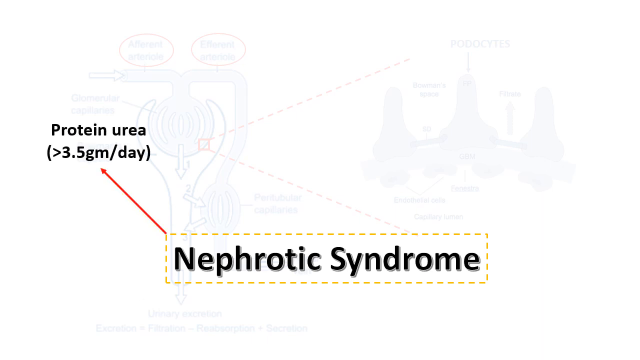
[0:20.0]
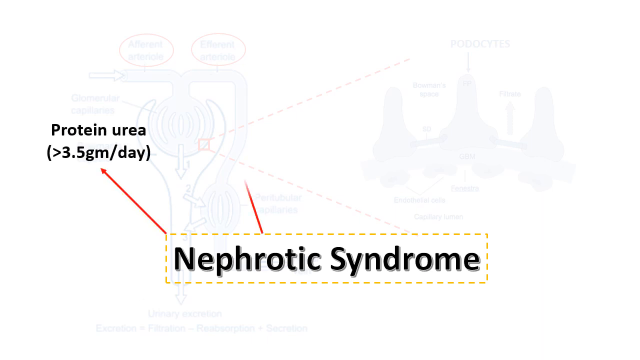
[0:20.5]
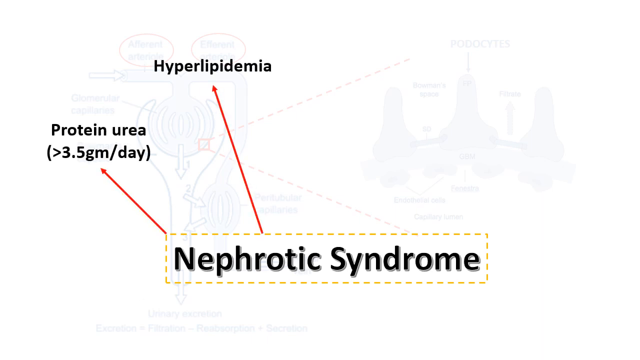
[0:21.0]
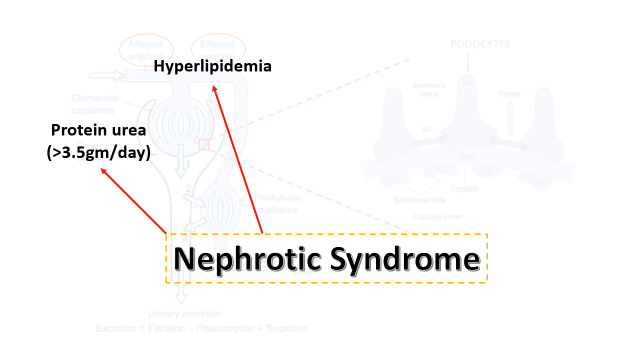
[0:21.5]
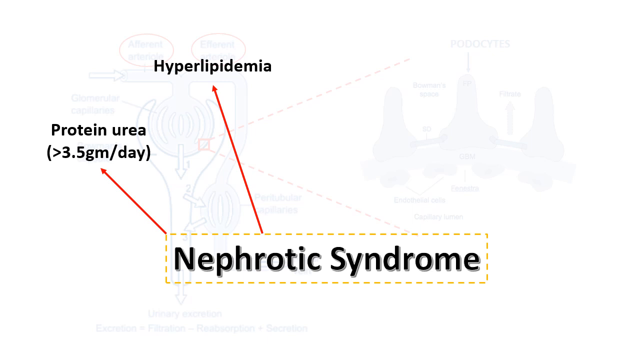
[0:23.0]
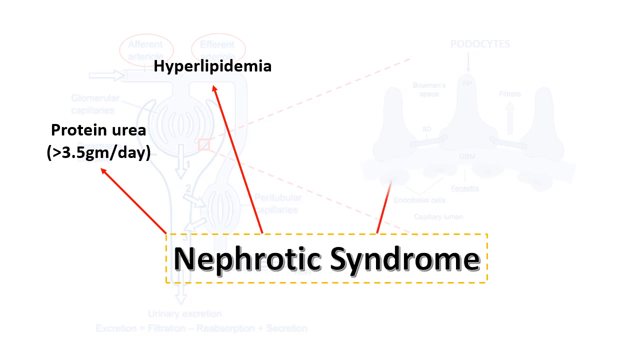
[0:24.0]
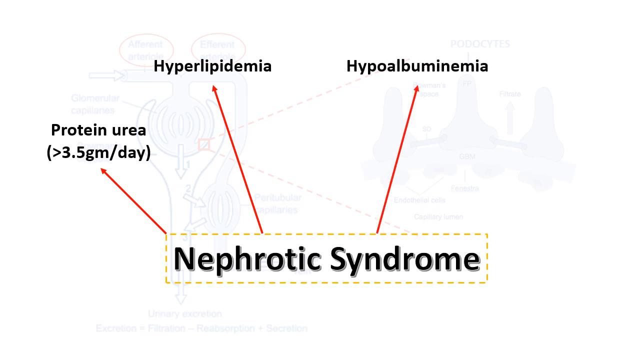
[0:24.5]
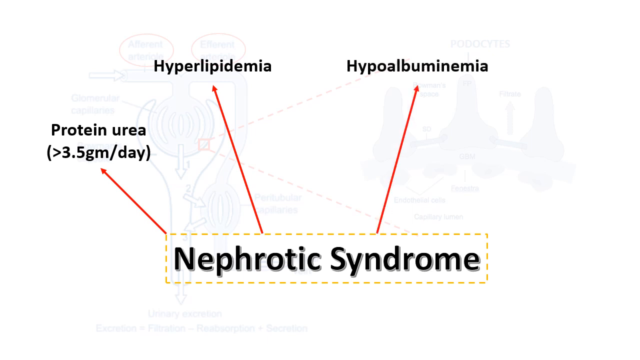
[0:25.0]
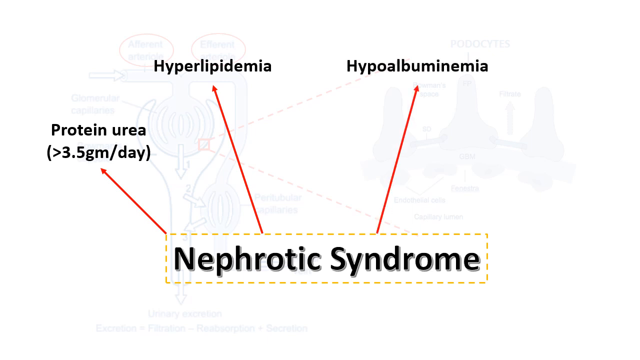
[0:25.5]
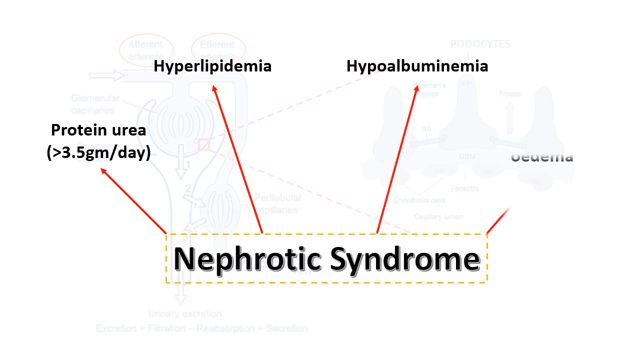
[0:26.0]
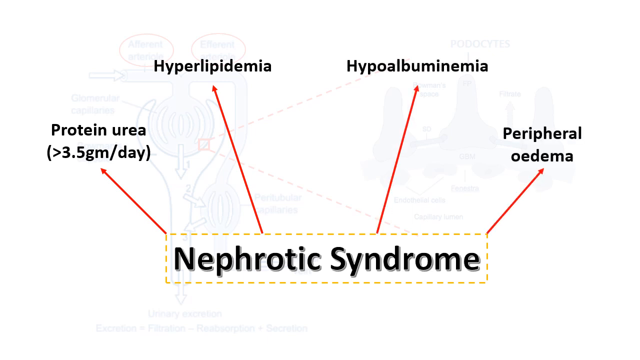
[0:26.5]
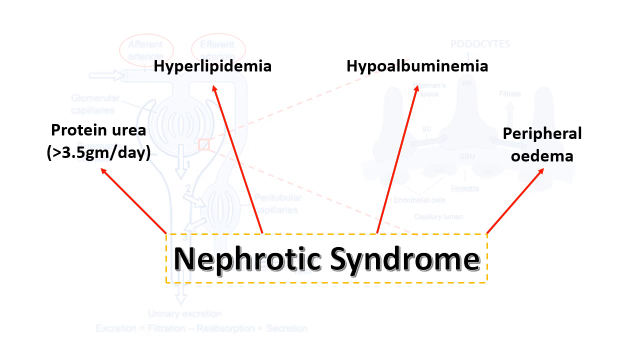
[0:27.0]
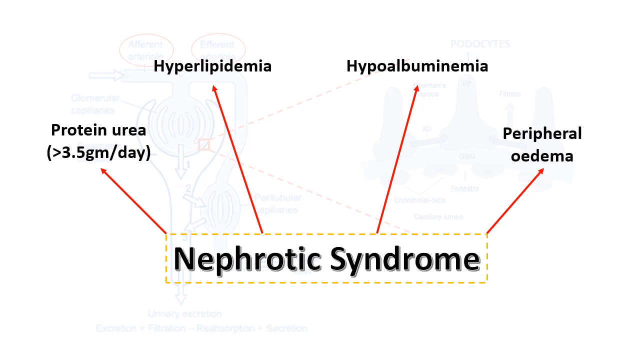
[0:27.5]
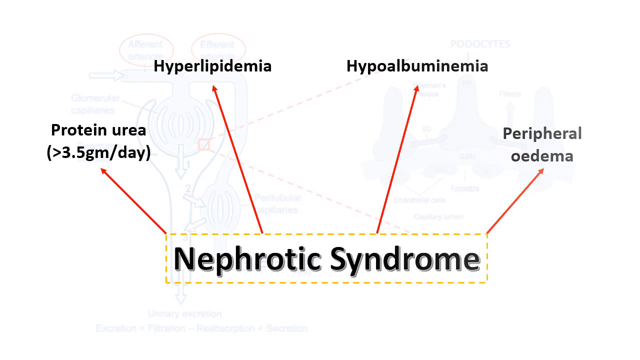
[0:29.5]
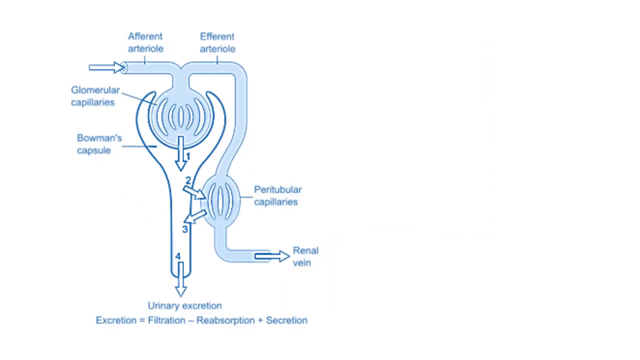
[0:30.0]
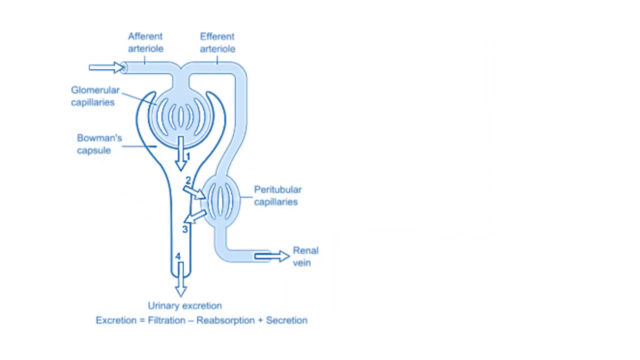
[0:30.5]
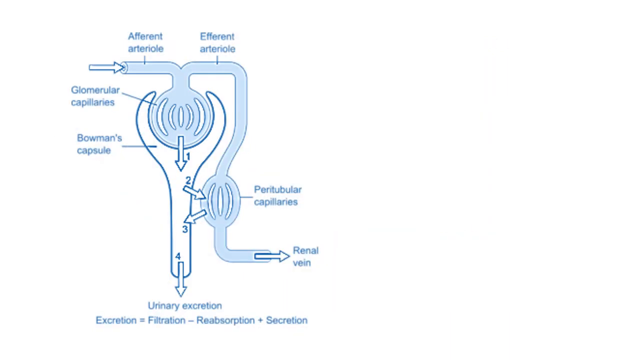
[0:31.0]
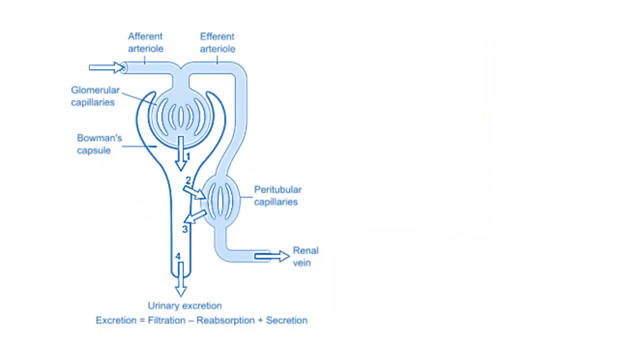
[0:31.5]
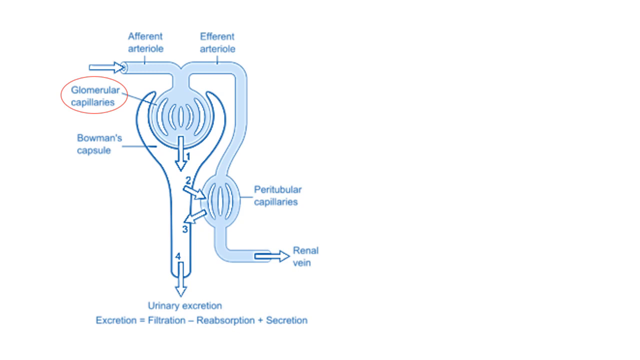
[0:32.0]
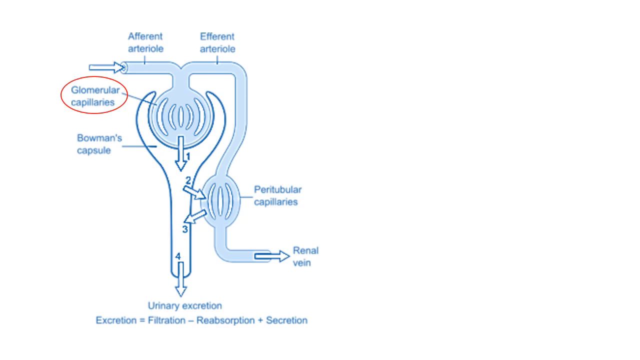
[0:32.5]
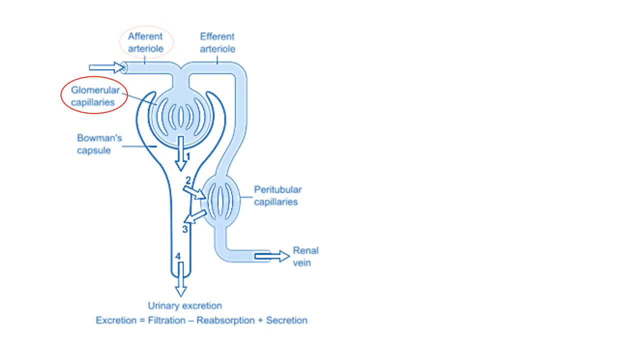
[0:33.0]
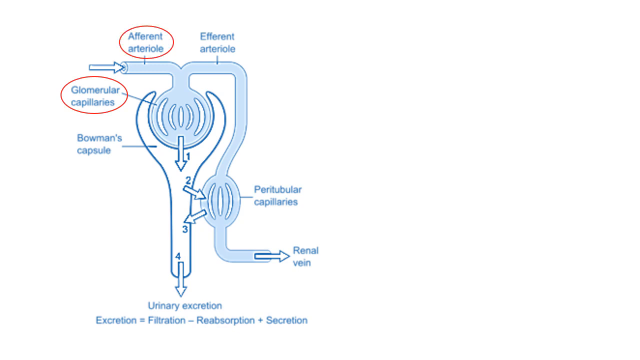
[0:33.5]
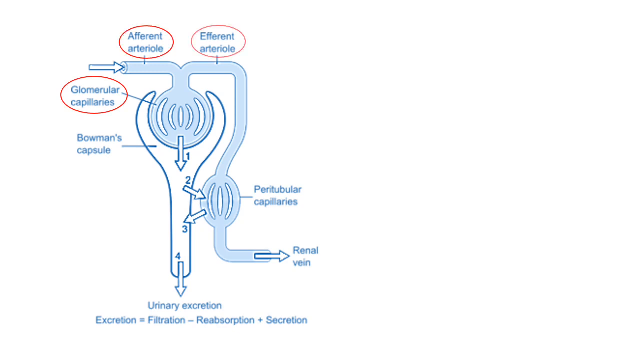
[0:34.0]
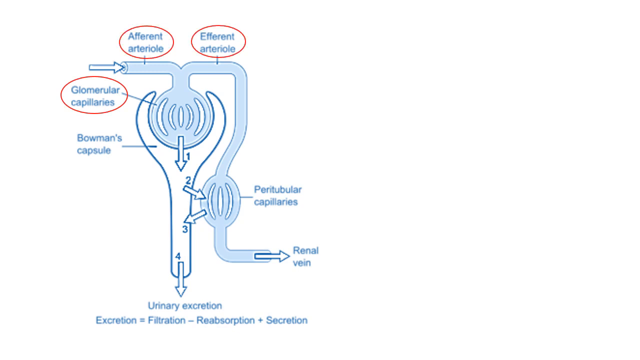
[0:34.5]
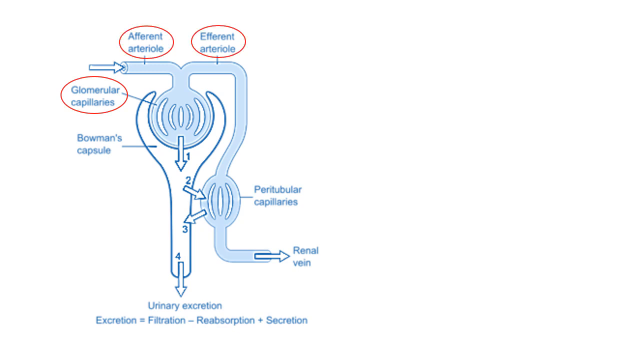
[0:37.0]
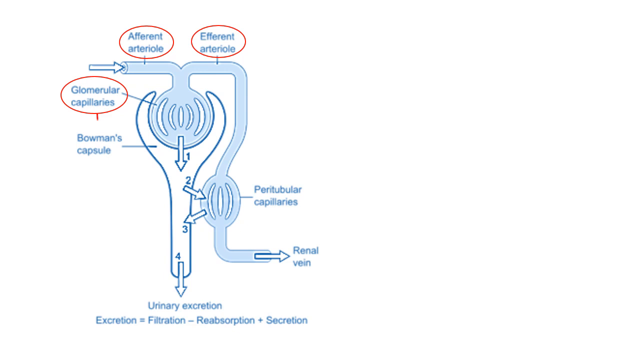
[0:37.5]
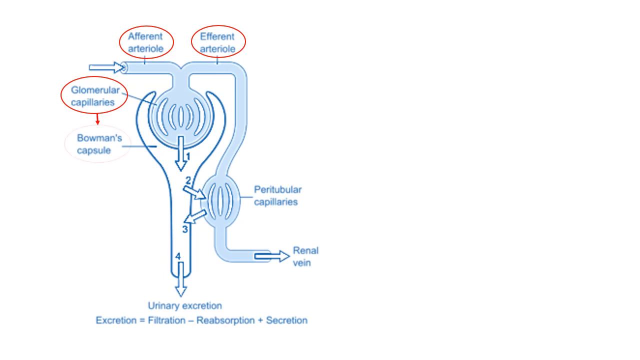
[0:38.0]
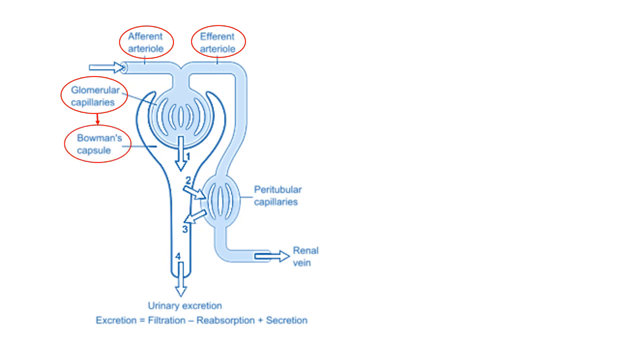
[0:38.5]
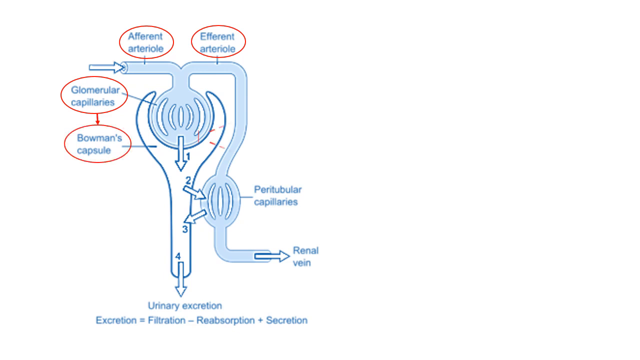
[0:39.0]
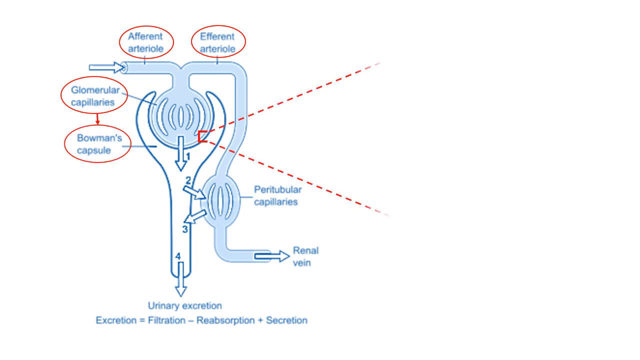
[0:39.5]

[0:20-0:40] On the white background the faded diagram is just barely visible, and near the bottom "nephrotic syndrome" is outlined in an orange dotted line. A red arrow comes from the upper left corner, with "proteinuria" at its tip. Another arrow comes up from the orange dotted line around the R of "nephrotic" and points up to the word "hyperlipidemia" in black. A third red arrow comes around the N in "syndrome" and points up to "hypoalbuminemia". A fourth line appears at the upper right corner of the orange dashed line, pointing to "peripheral oedema". The page then disappears and a clearer picture of the left-hand diagram appears, outlined in dark blue with certain areas shaded a lighter blue. Arrows show the direction of movement through this part of the kidney, including an arrow at the bottom going down for urinary excretion.